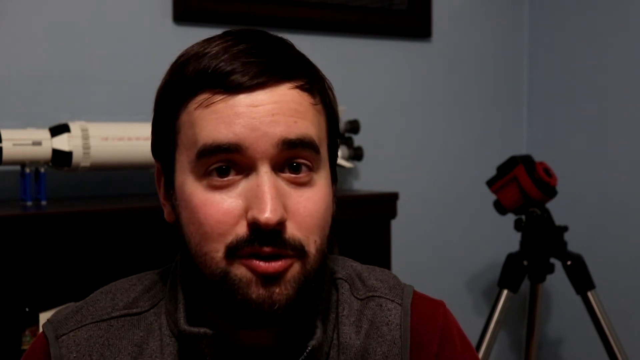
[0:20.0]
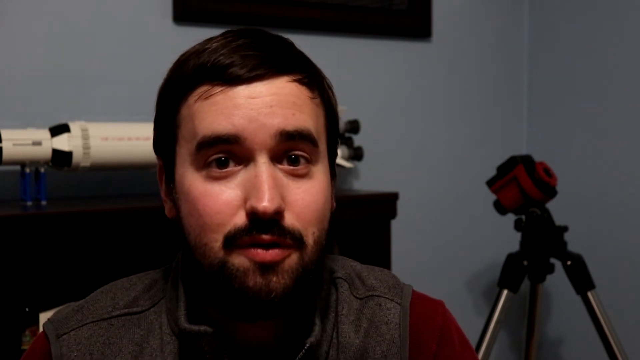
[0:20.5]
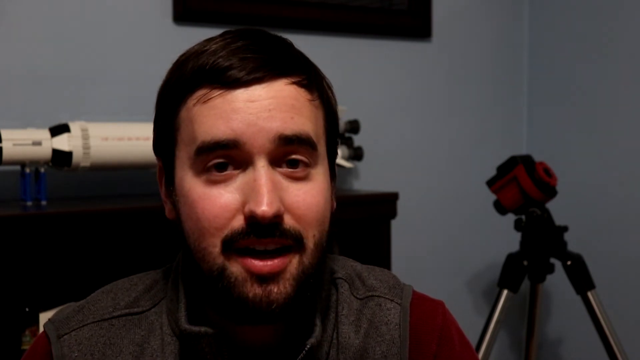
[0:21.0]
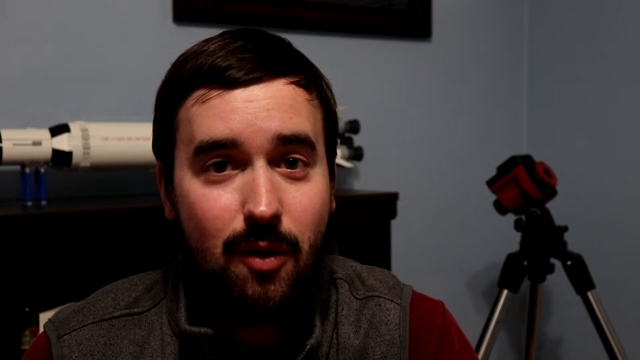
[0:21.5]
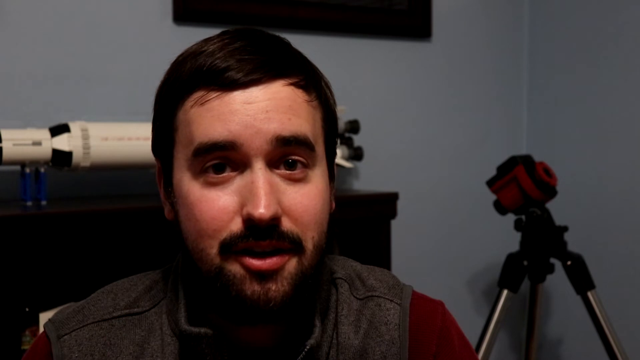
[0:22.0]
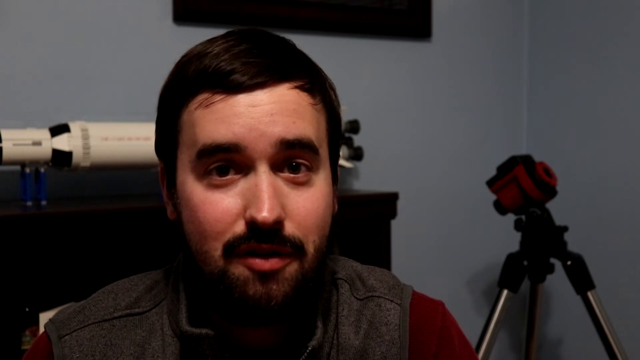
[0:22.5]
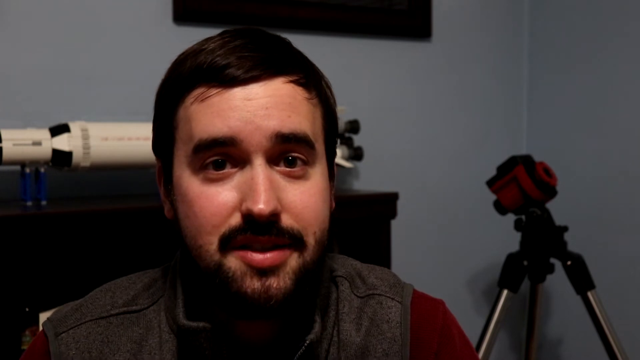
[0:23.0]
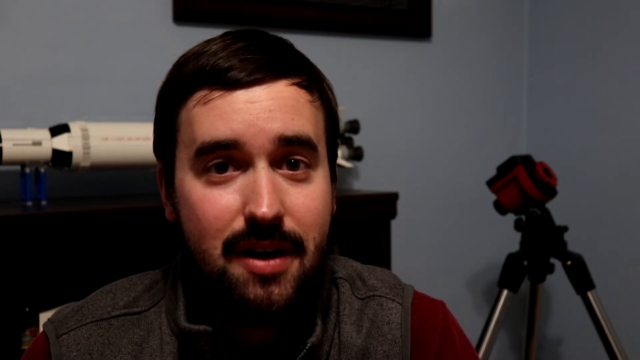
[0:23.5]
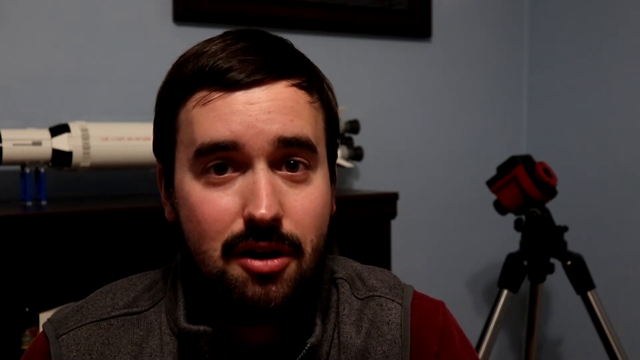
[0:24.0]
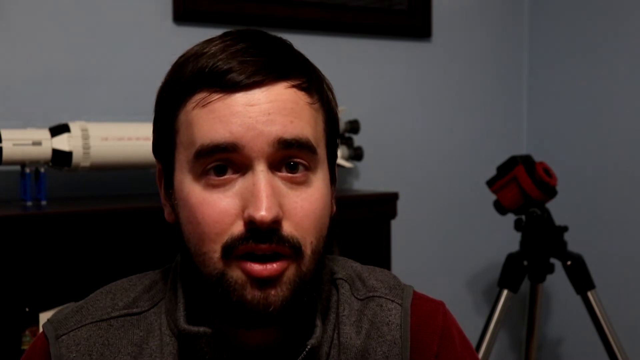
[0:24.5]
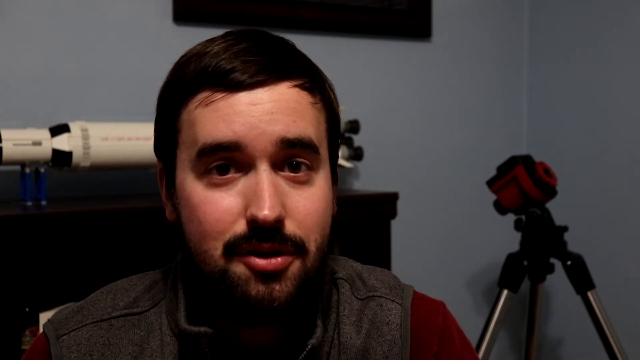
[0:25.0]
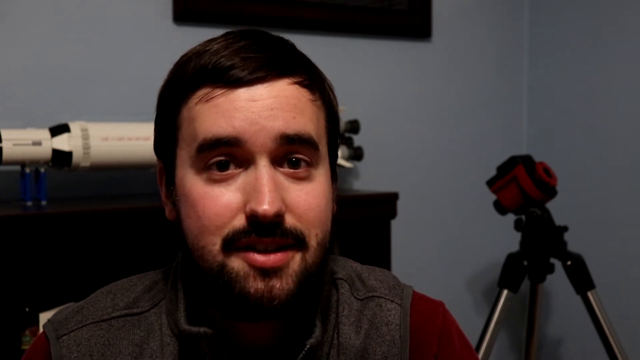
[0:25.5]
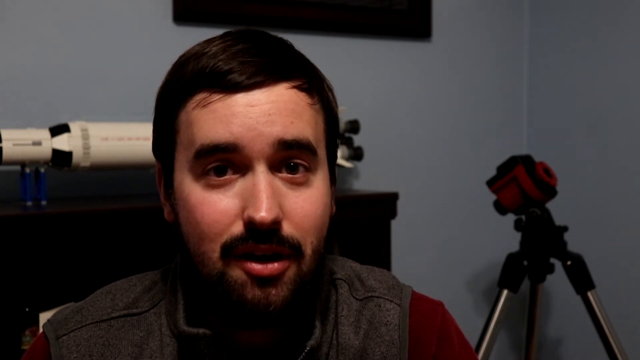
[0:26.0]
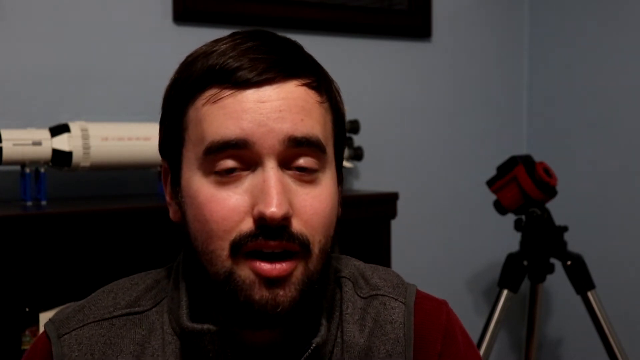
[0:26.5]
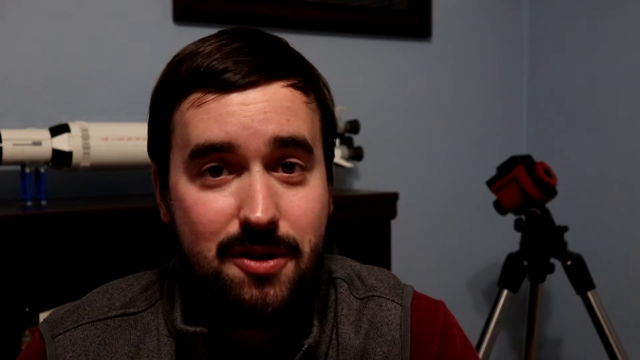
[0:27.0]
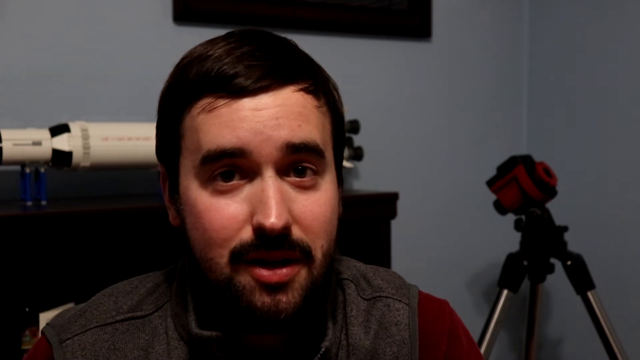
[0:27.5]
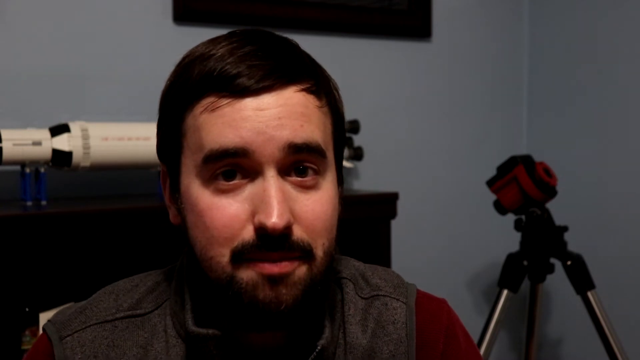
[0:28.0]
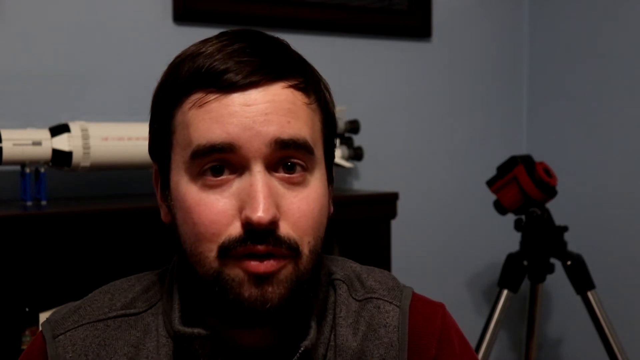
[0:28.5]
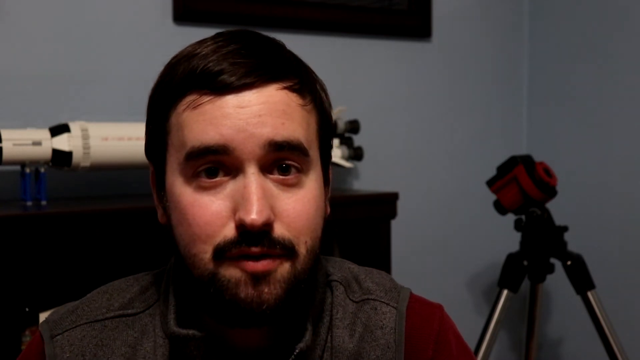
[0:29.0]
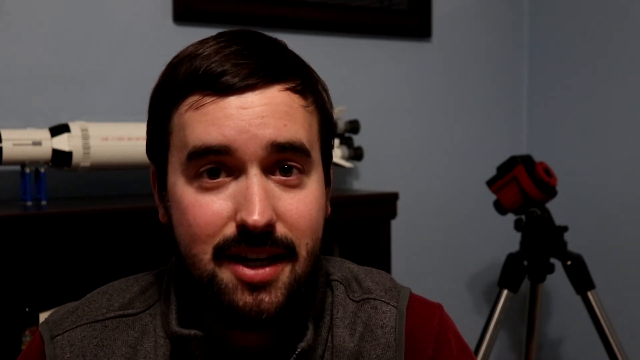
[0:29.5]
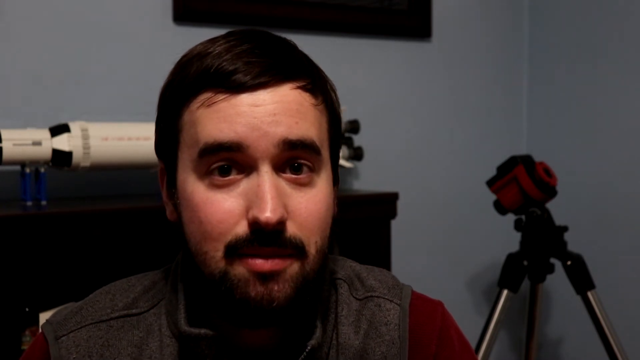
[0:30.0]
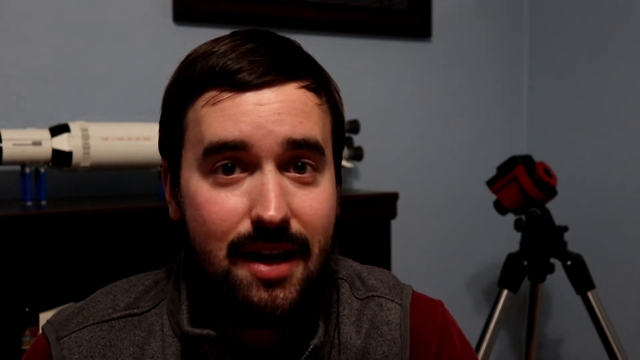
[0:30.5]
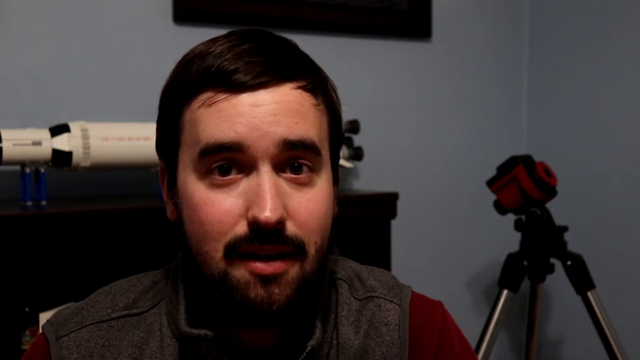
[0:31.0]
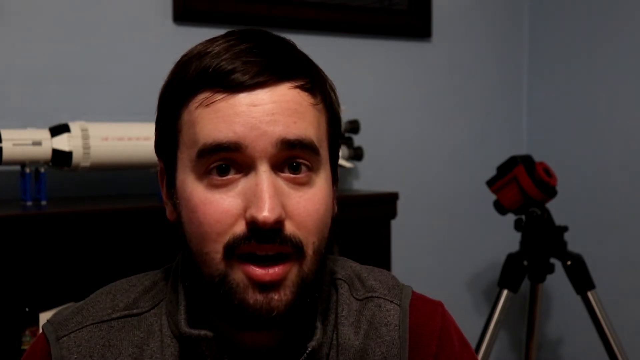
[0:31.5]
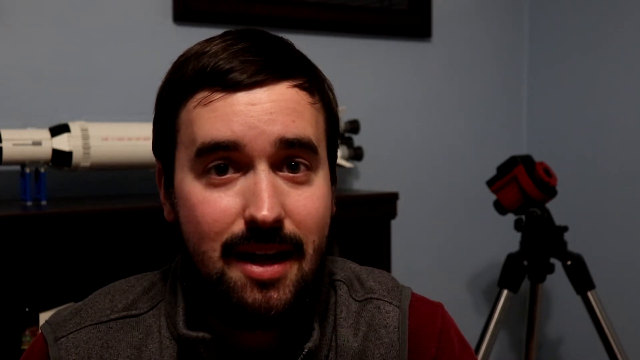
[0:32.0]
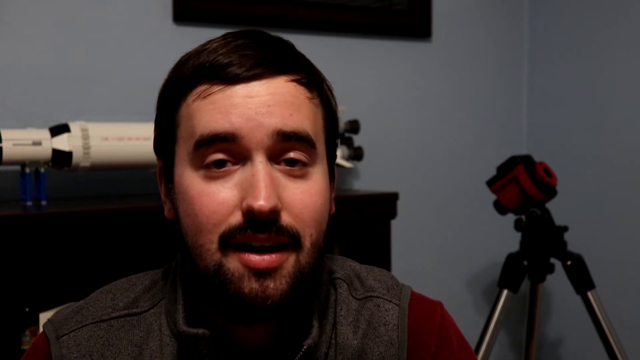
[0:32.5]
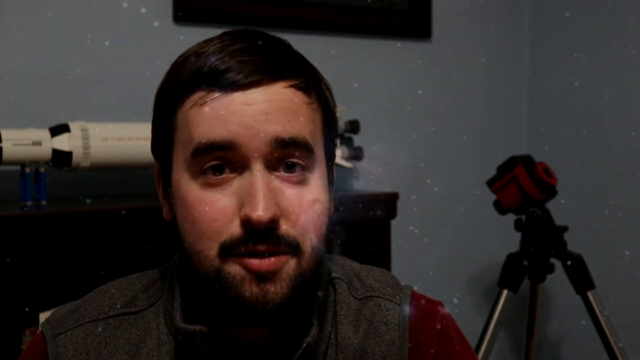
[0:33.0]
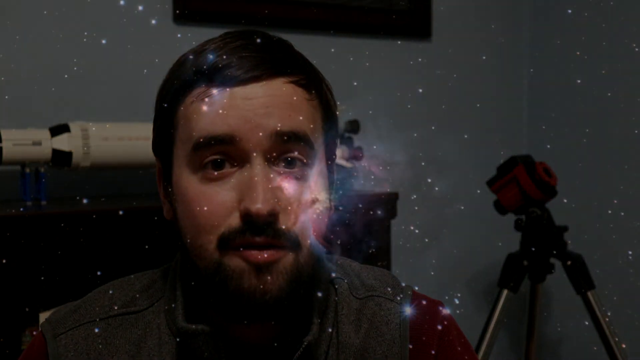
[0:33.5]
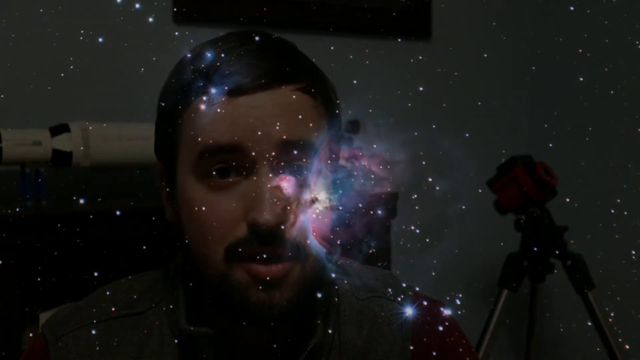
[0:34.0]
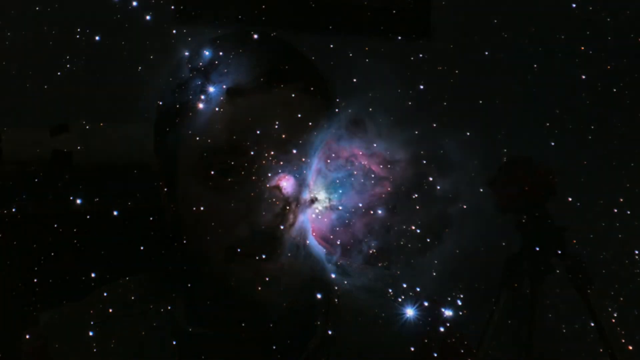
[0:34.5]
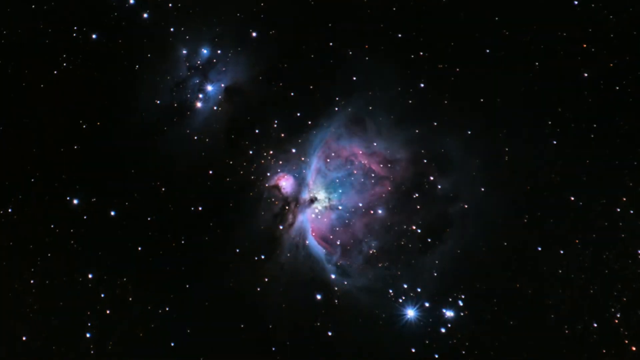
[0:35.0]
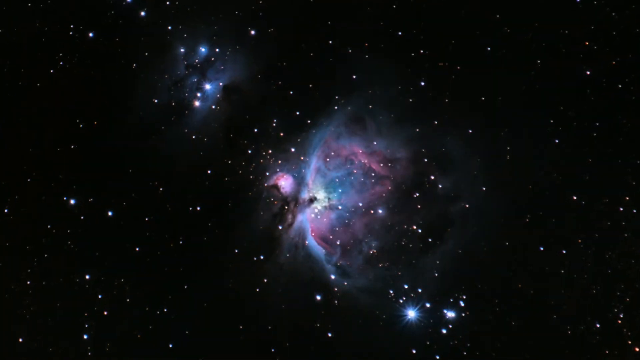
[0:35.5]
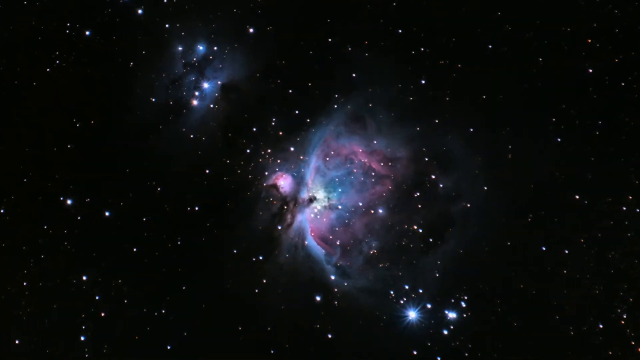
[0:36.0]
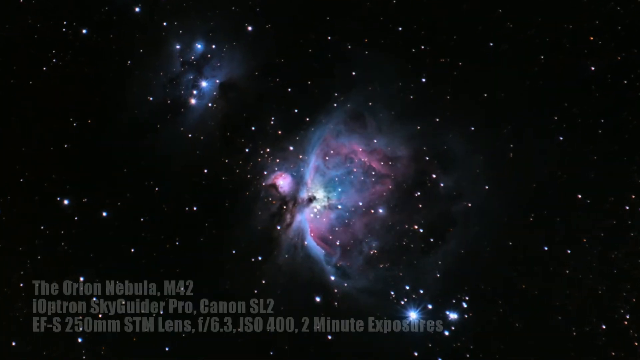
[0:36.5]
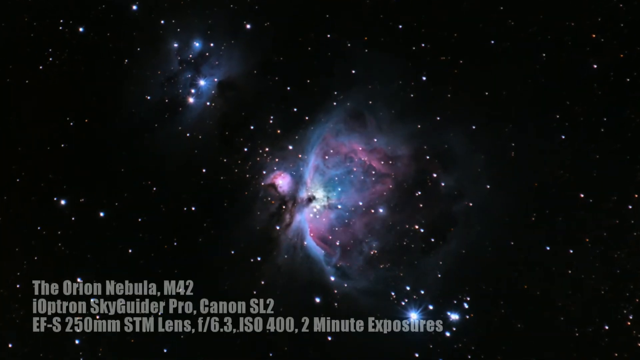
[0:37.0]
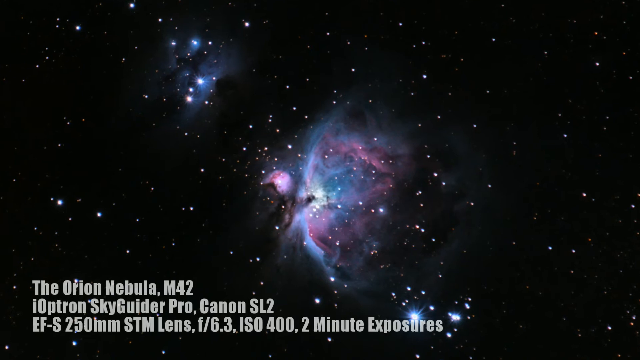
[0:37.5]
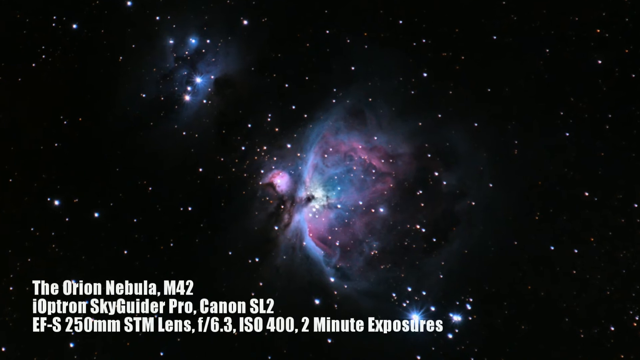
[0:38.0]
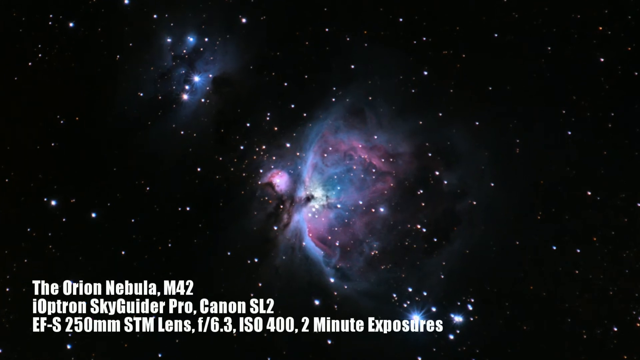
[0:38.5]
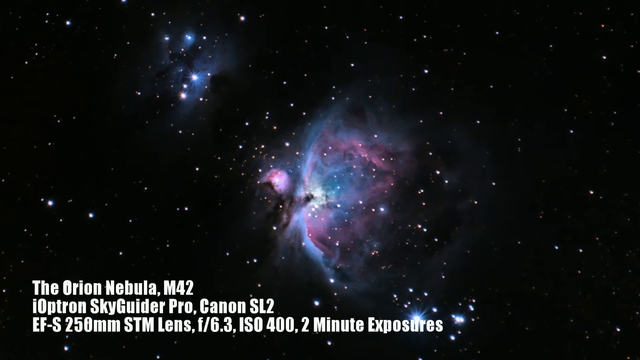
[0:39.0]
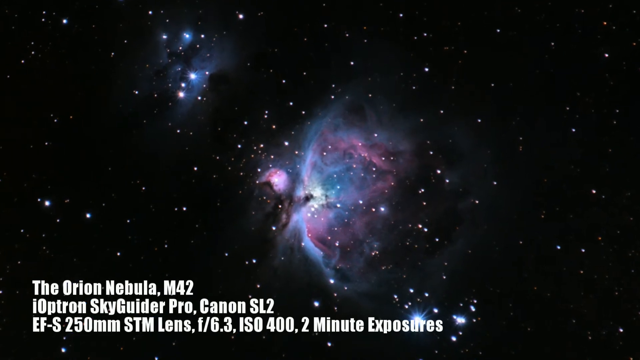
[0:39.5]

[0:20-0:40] The man looks directly at the camera. He seems to have turned his chair to face it and scooted in a little closer, and he looks straight into the camera as he speaks, his jaw moving up and down. He has dark brown eyes. On the light gray wall behind him, the bottom portion of a frame hangs. His shirt is a maroonish red, with a brownish vest over it. The rocket is visible behind him; it looks like it has three black rocket boosters at the bottom, and it is one width before getting narrower toward the nose. The screen then fades to a photograph of the night sky showing stars and what looks like a nebula.